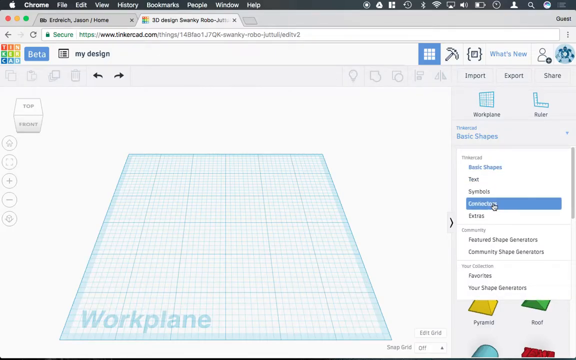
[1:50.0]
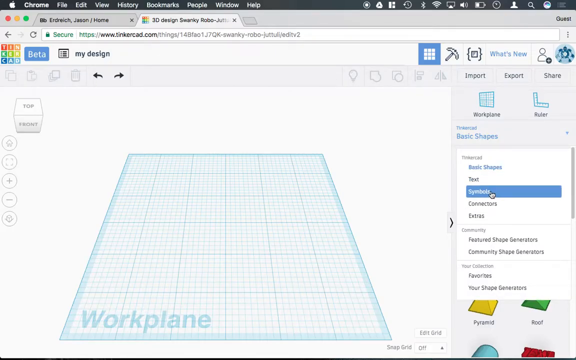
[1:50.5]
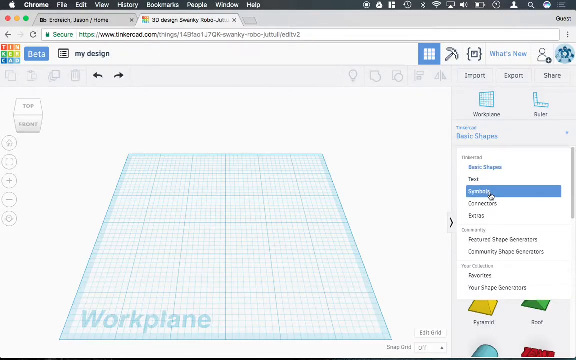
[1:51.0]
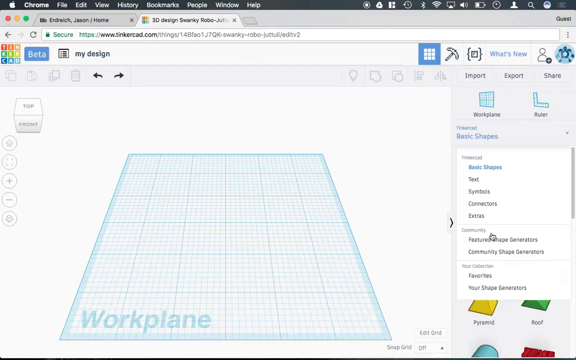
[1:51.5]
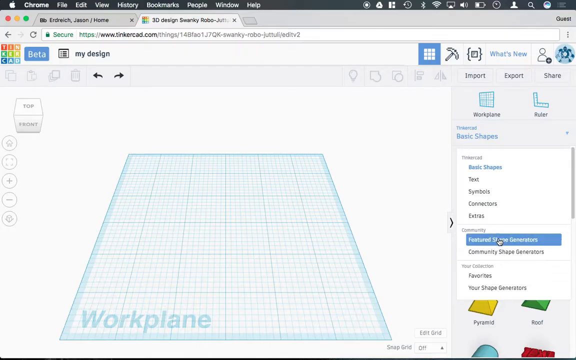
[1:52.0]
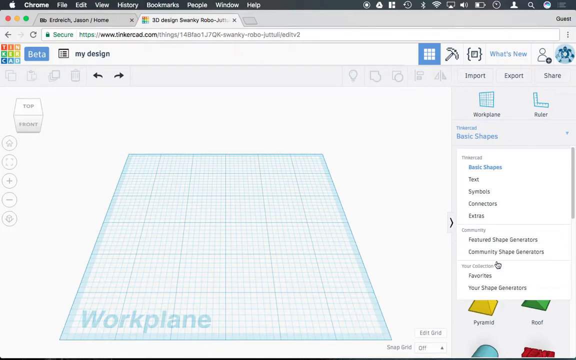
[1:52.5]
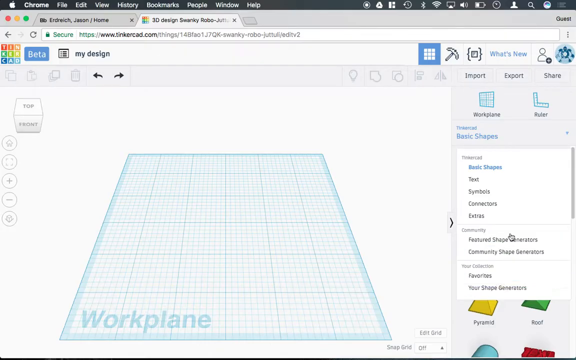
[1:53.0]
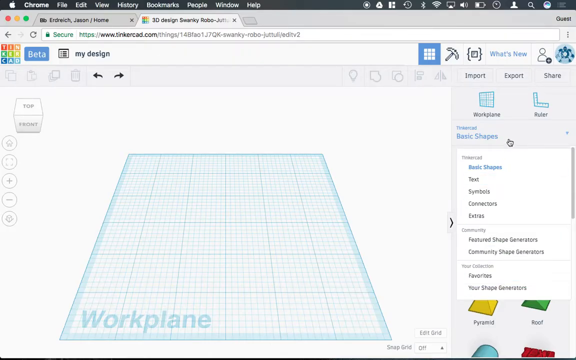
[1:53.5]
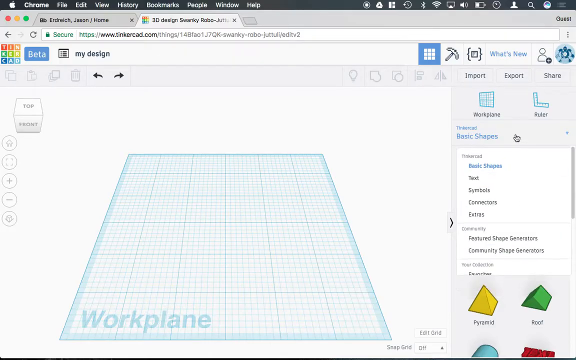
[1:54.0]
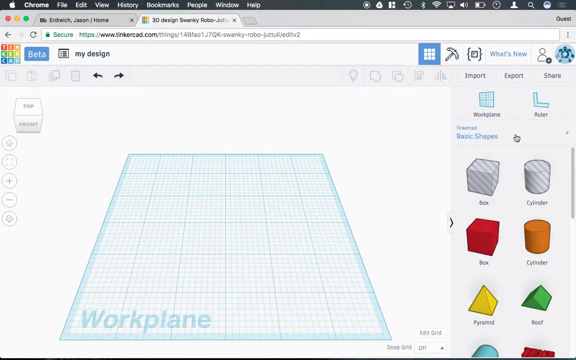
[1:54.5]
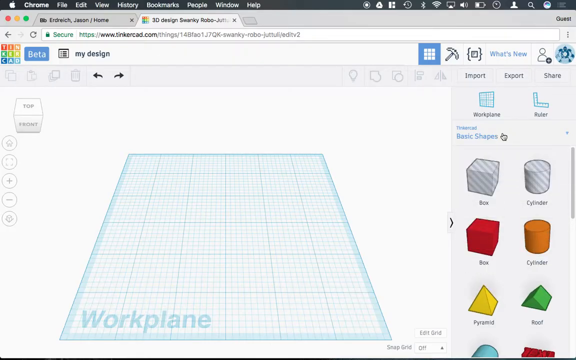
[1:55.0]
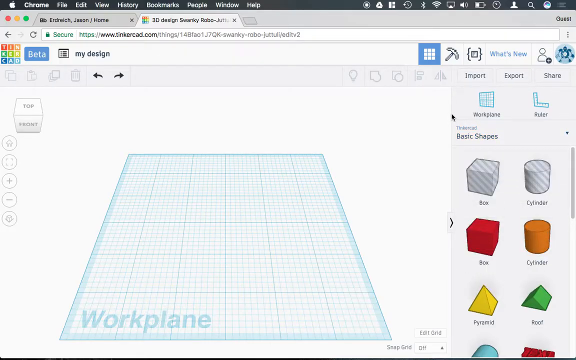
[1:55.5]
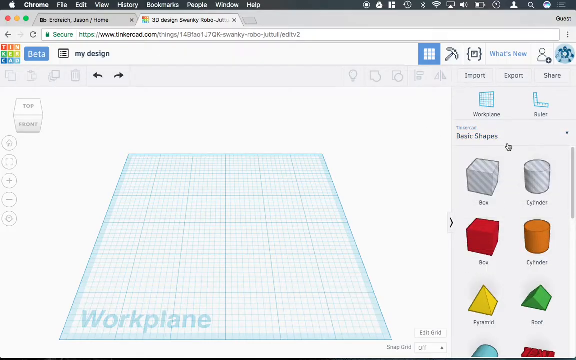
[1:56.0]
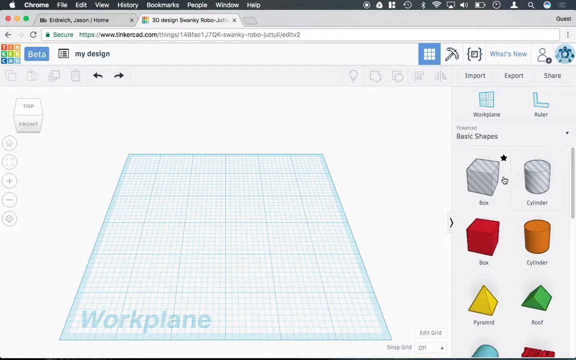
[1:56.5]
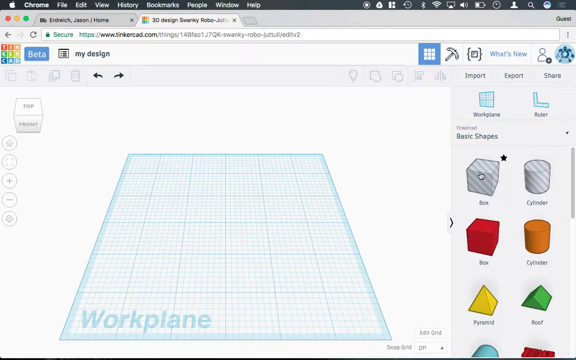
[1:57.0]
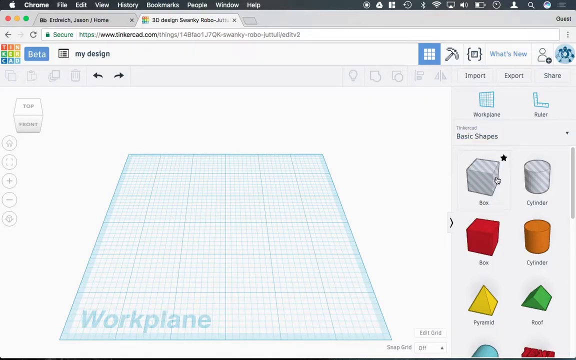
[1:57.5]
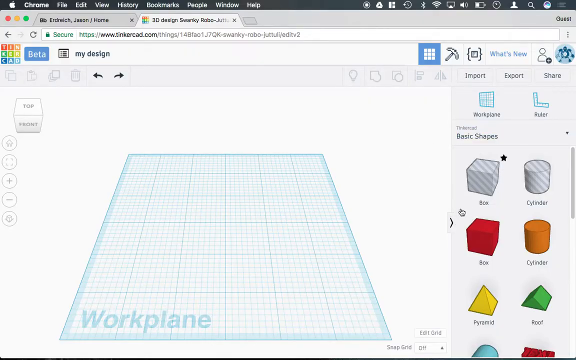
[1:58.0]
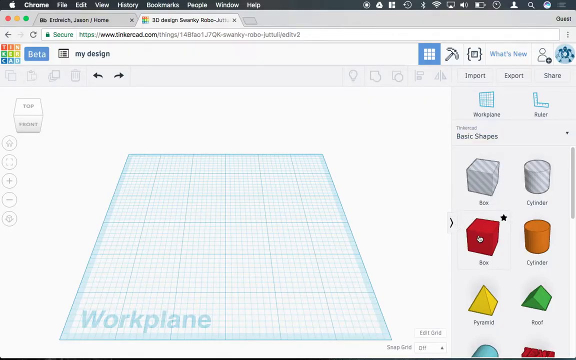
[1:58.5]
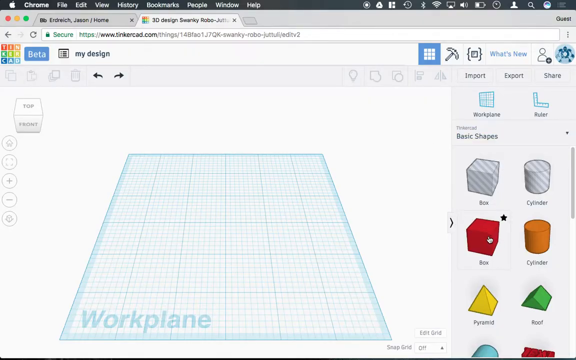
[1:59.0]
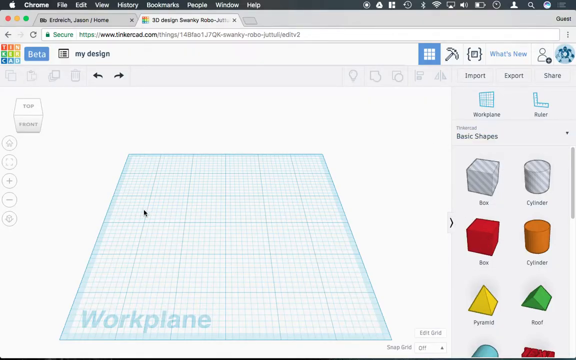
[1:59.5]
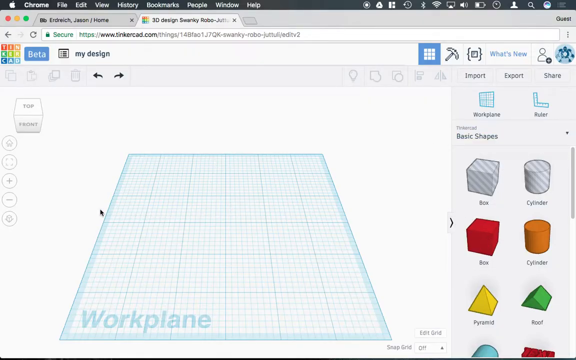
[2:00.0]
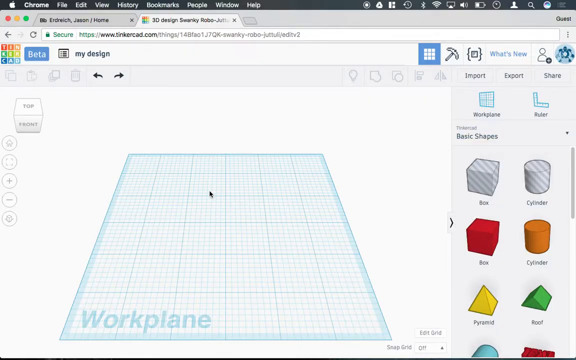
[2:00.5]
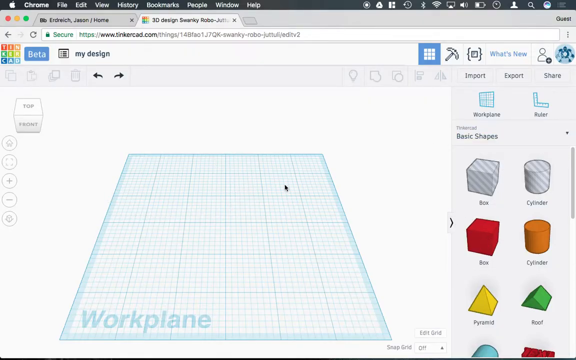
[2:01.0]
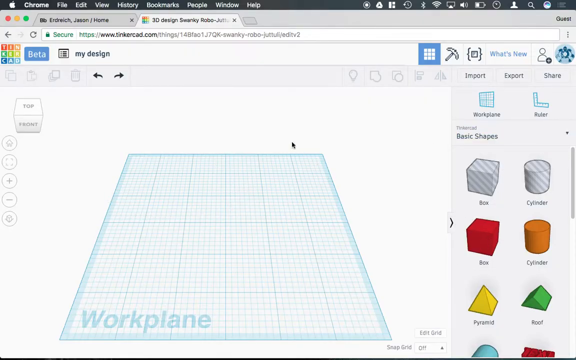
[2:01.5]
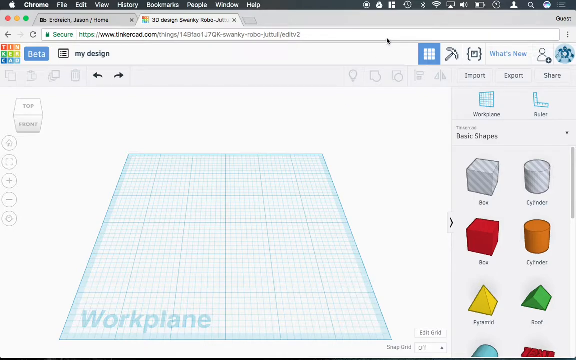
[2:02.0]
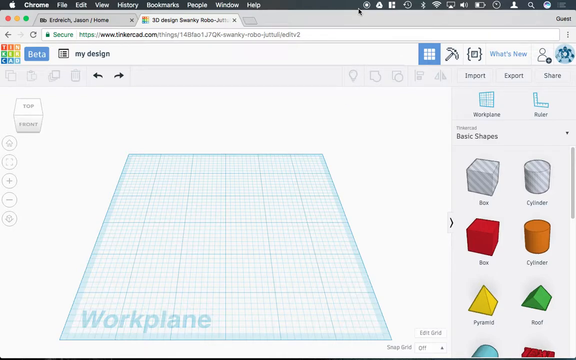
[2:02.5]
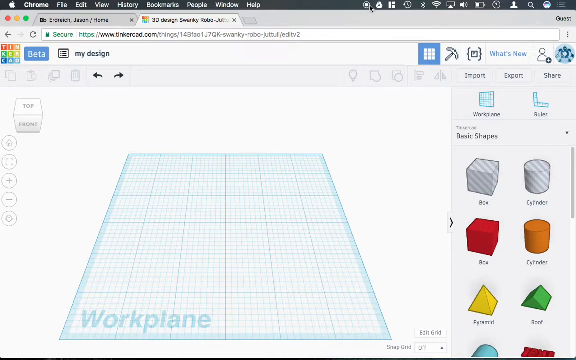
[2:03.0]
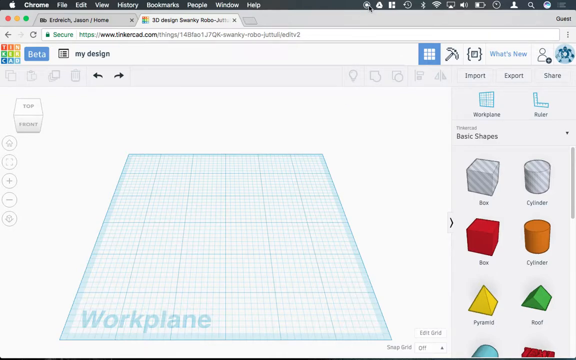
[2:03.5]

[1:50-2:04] The user hovers over all the options in the drop-down menu before exiting it and clicking the screen recording button, a white circle within a white ring, on the top bar of the Apple Mac, which stops the screen recording and ends the video. Overall, the video appears to illustrate how to drag and drop shapes onto the Tinkercad workplane and manipulate them, adjust the dimensions of the grid, and use the 3D view.